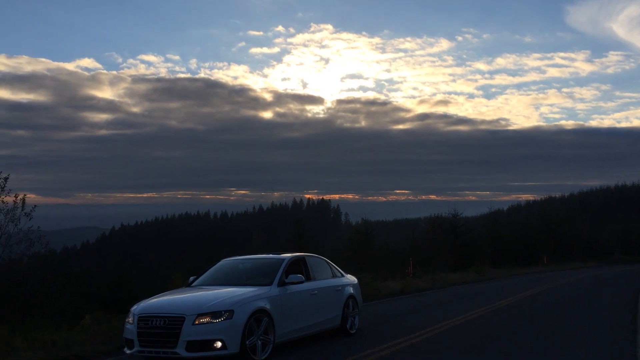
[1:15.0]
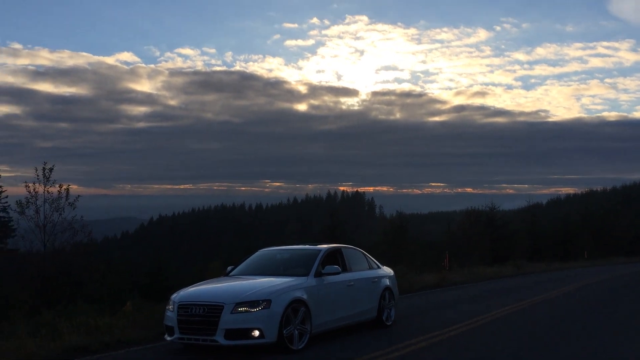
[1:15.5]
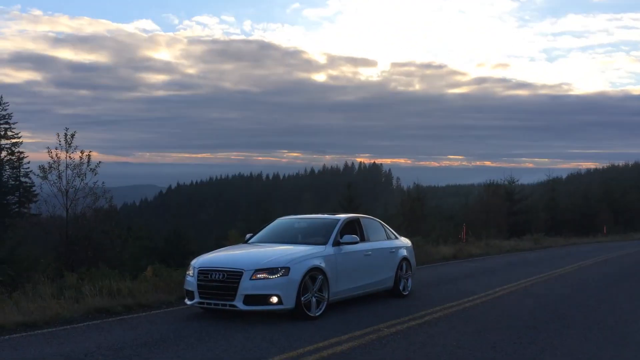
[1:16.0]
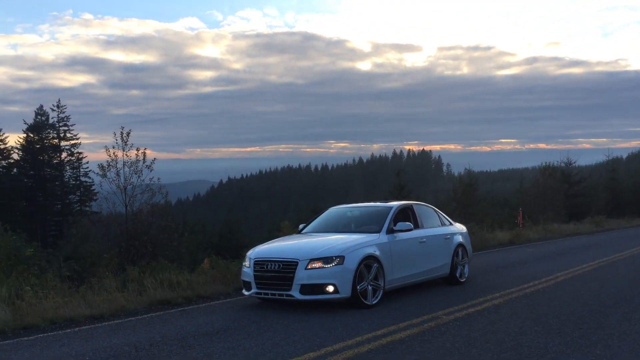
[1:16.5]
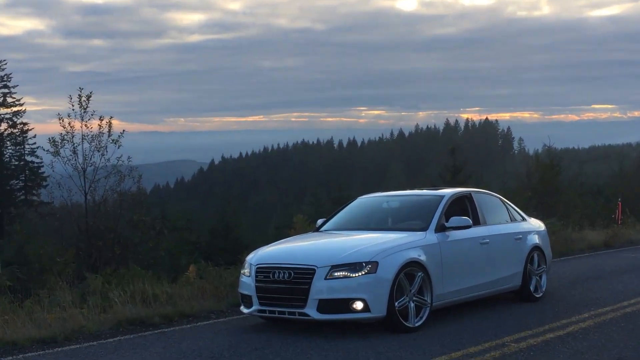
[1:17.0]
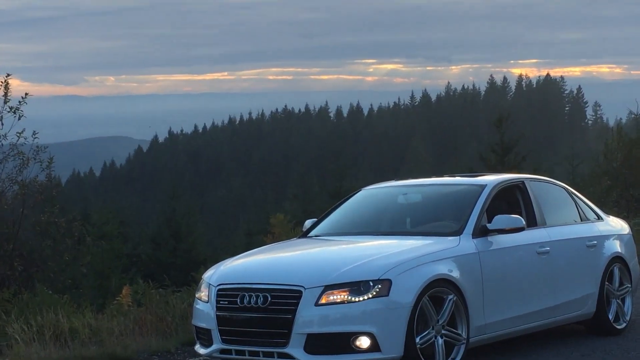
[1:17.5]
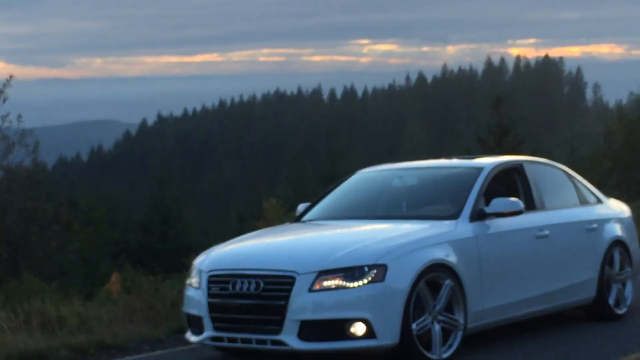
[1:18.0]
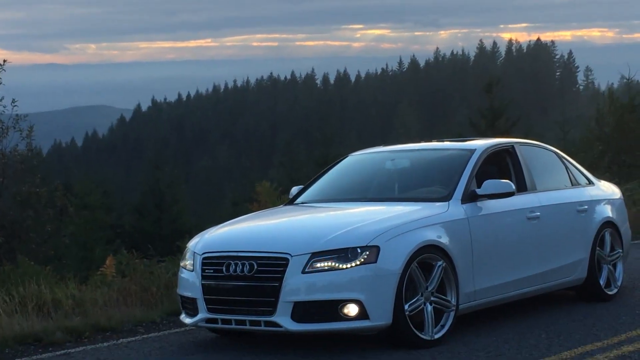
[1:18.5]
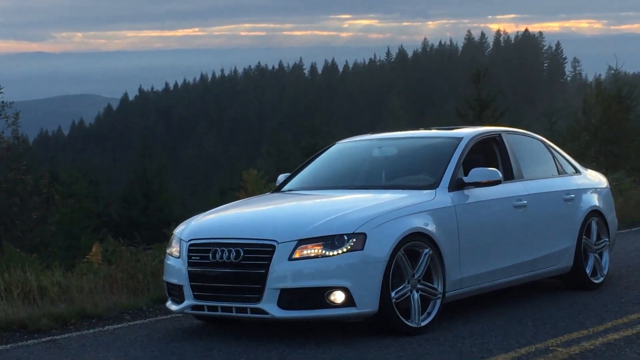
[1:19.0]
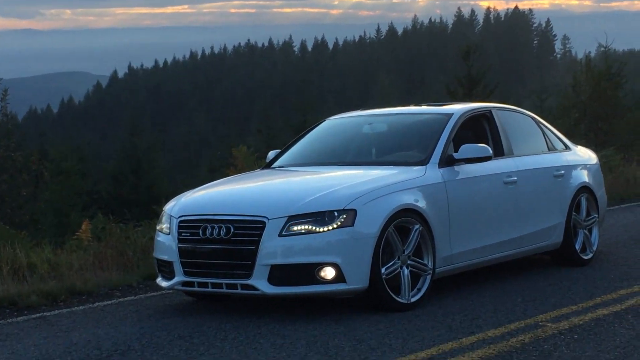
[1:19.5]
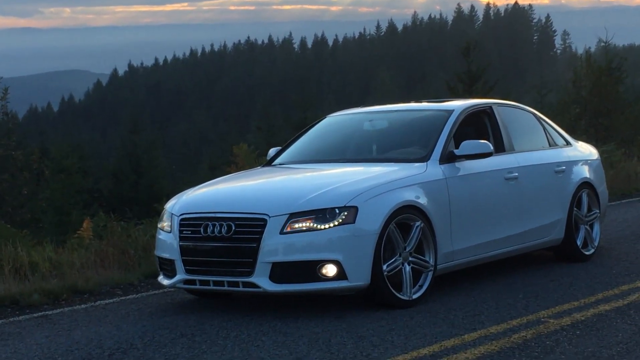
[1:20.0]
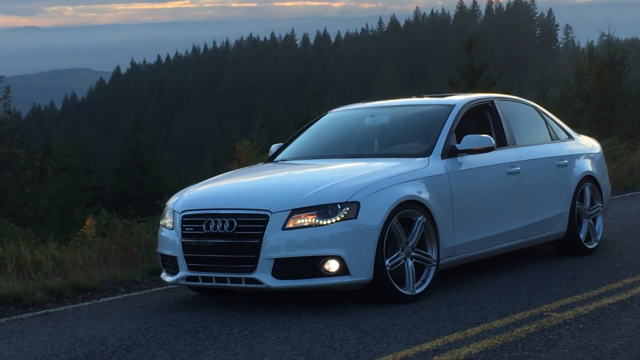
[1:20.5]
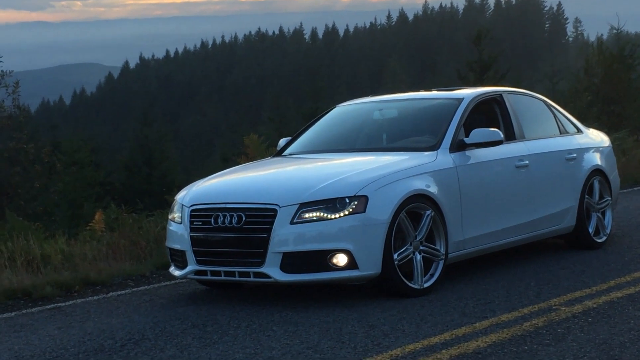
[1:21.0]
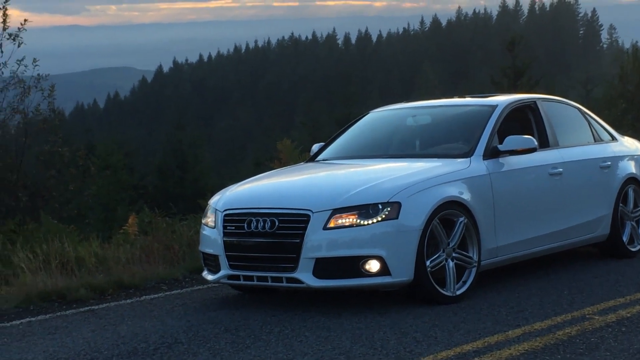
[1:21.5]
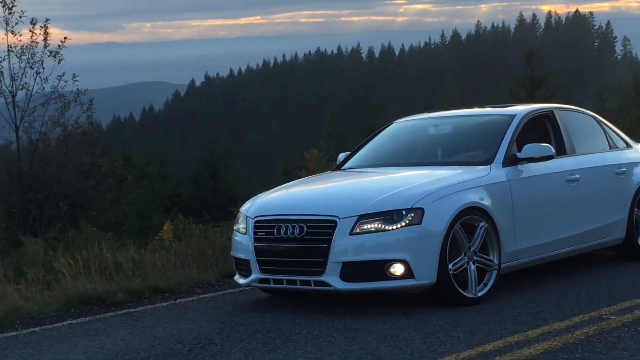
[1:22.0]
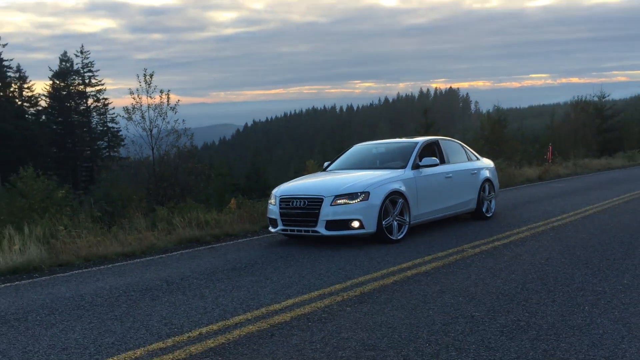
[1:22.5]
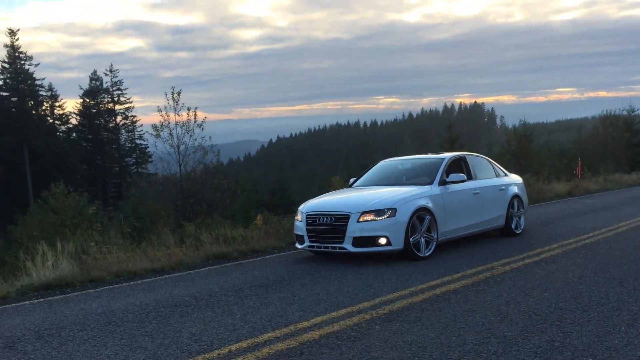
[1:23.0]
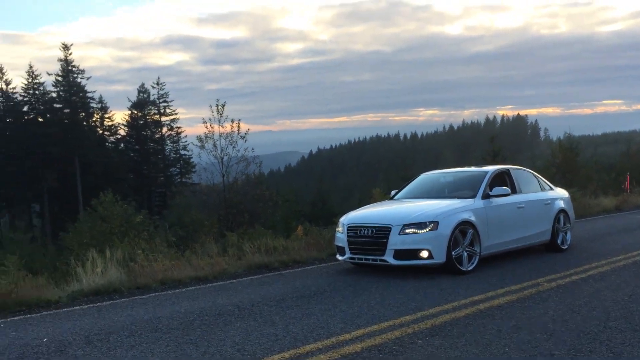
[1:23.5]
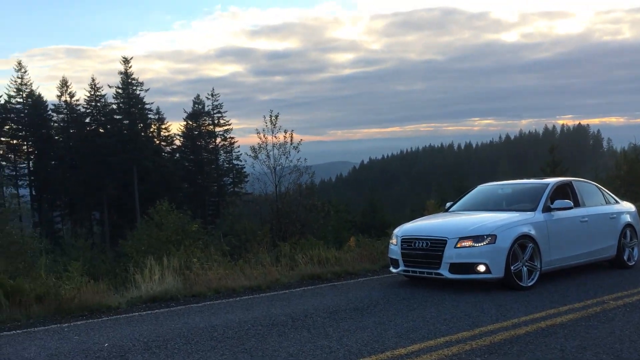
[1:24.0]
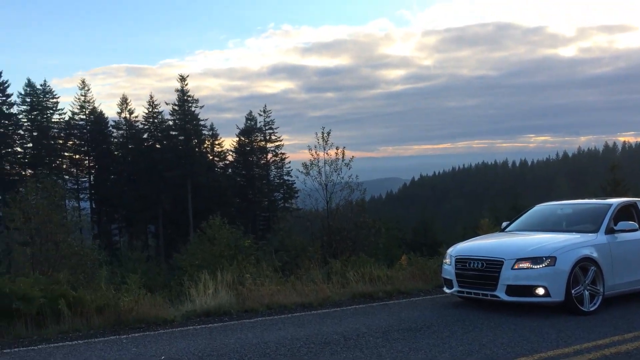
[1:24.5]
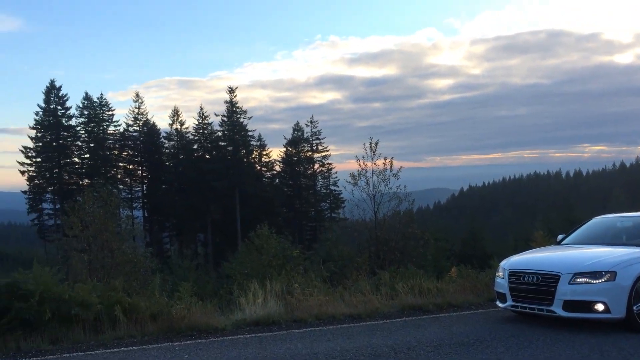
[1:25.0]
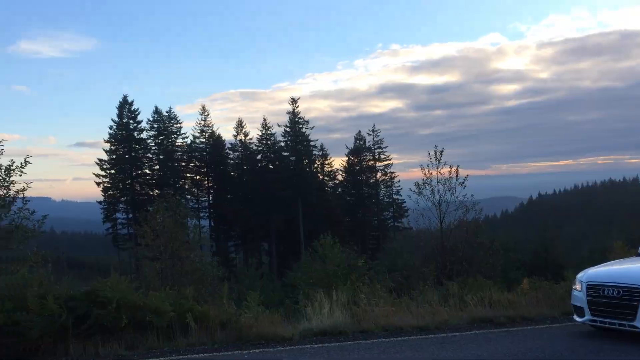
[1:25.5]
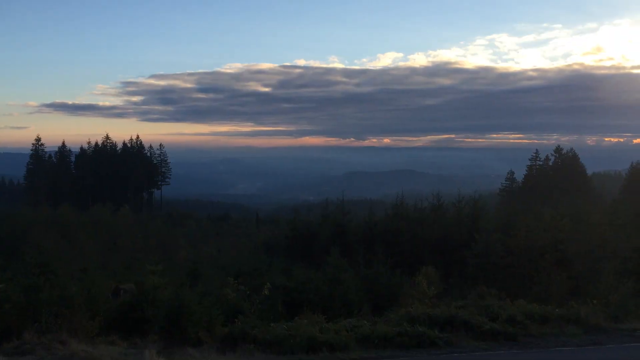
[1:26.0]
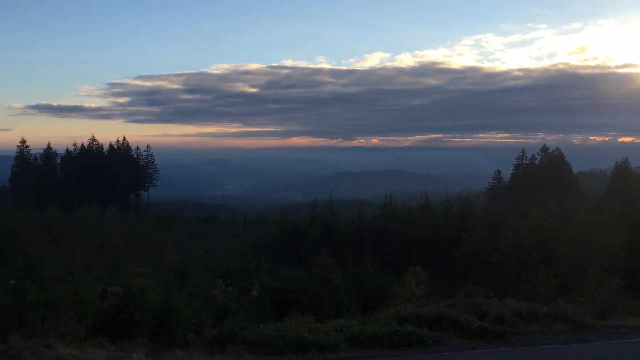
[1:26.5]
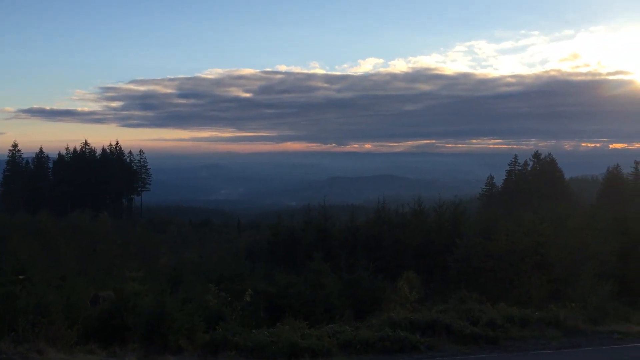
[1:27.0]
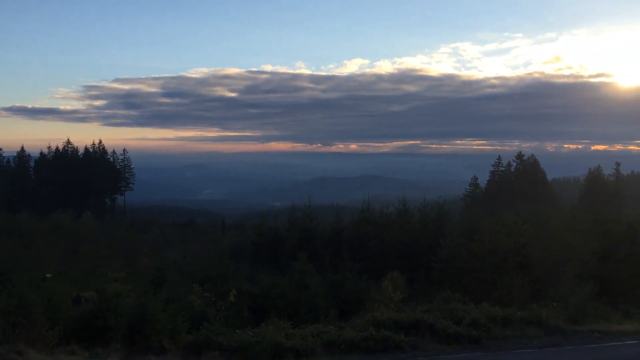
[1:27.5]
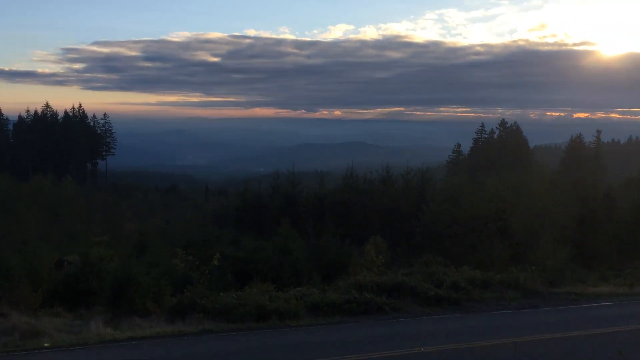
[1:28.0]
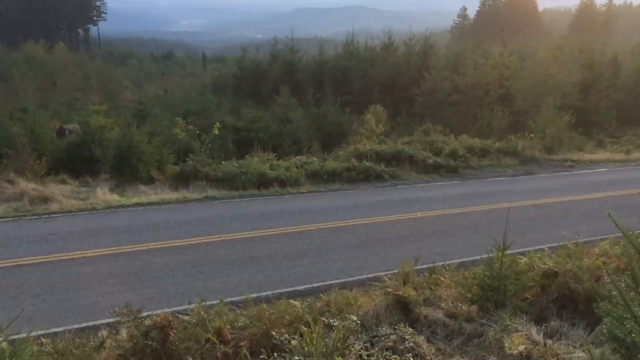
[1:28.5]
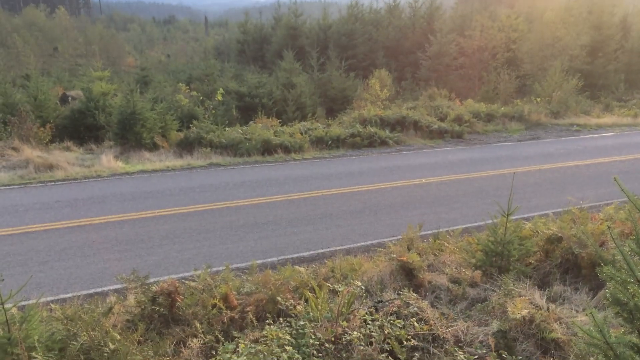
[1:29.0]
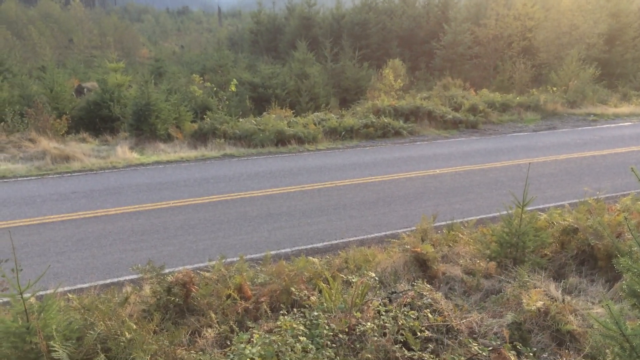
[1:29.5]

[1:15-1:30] The camera zooms in on the white Audi, which has flashing hazard lights and apparently new rims, still in the highway setting. The camera pans to the left, then an edit cuts to a blank shot of the highway with no car on it, then back to the car on the highway. The camera zooms in on the car, whose driver's side window is down, with the ridge line of the woods behind it. After a cut, a thicker foliage ridge line of the woods appears as the camera drops down to catch it before cutting back to the zoomed-in car, which has a ridge line and horizon of trees in the distance behind it and a big cloudy sky beyond that; toward the left the sky opens up into more blue. The next cut shows very thick green foliage along the empty highway, running on both parallel sides. The camera zooms out from the white car a little shakily, pans to the left and cuts; the new scene starts up and pans directly down.